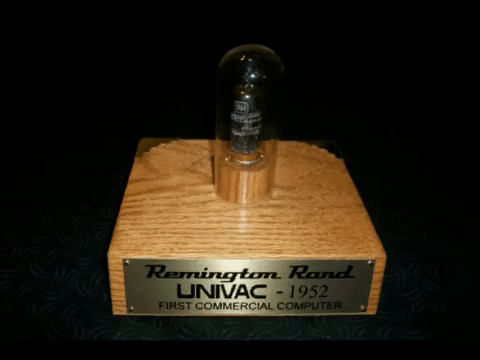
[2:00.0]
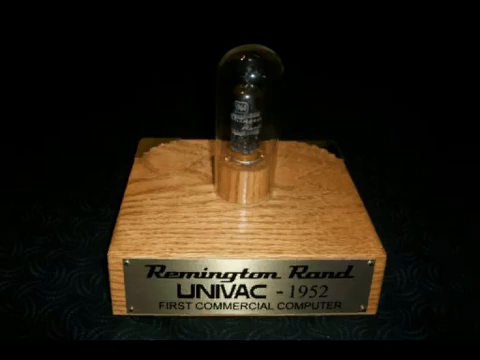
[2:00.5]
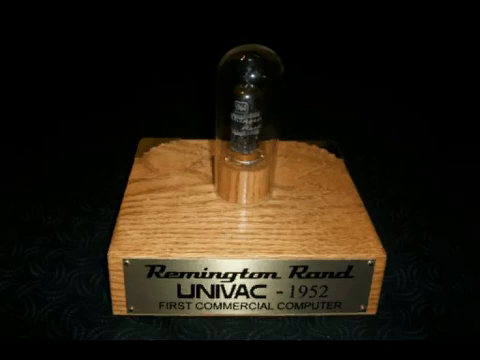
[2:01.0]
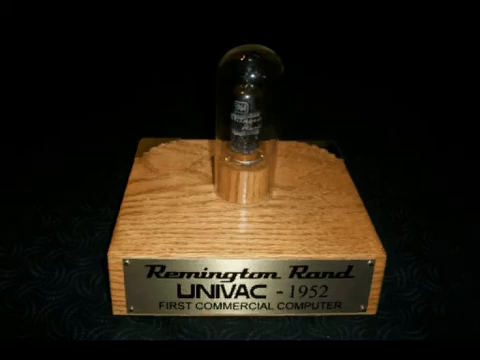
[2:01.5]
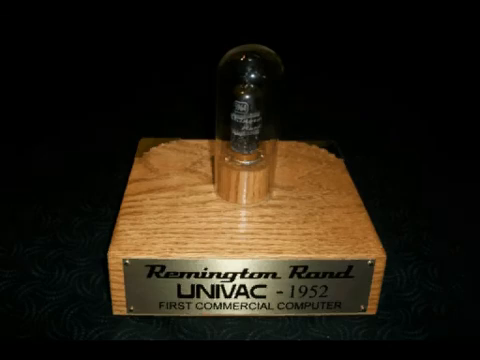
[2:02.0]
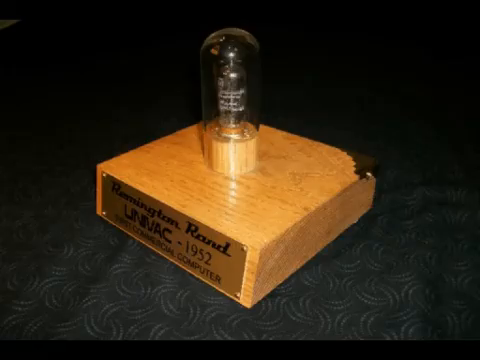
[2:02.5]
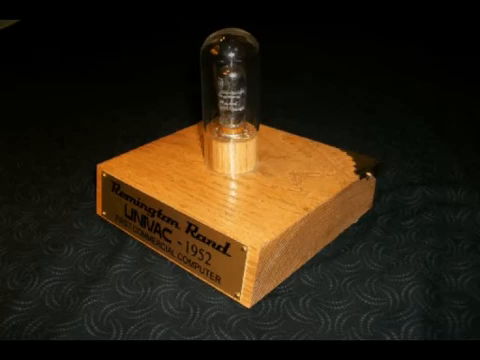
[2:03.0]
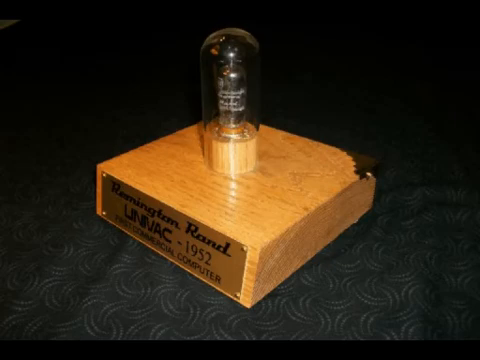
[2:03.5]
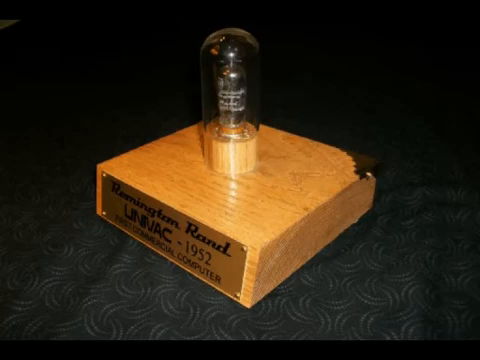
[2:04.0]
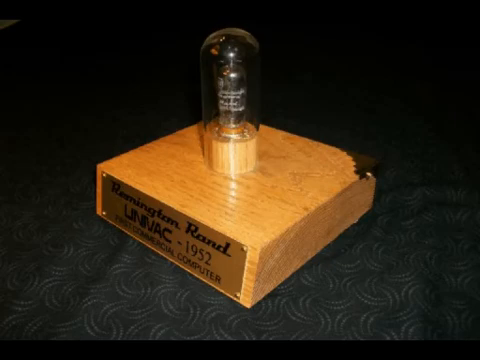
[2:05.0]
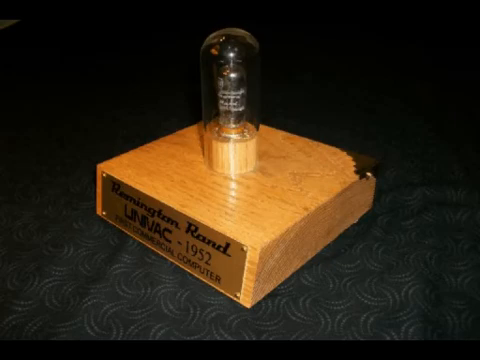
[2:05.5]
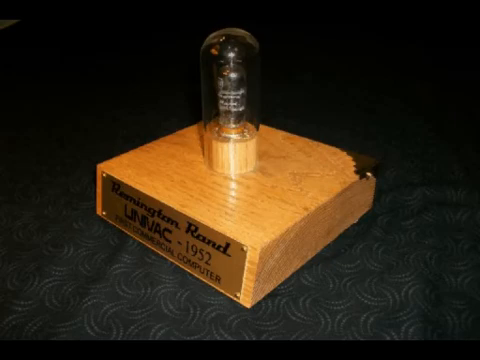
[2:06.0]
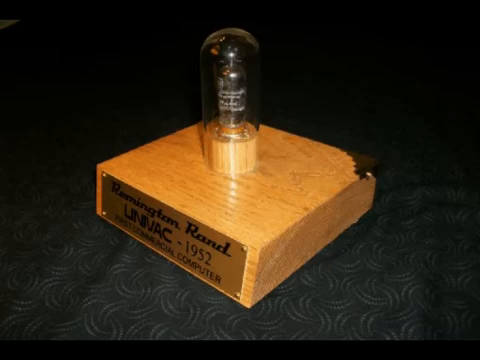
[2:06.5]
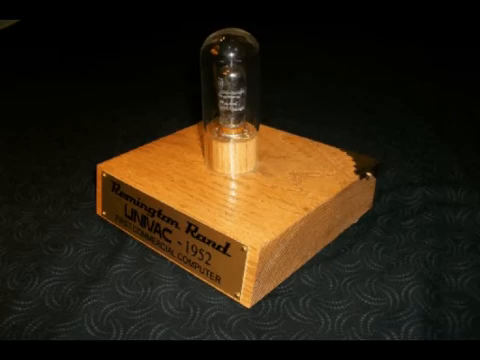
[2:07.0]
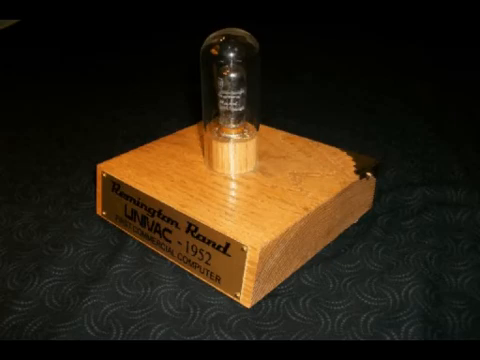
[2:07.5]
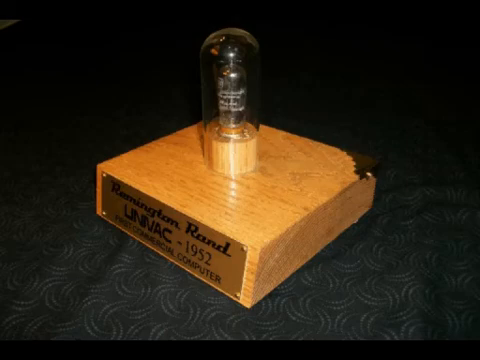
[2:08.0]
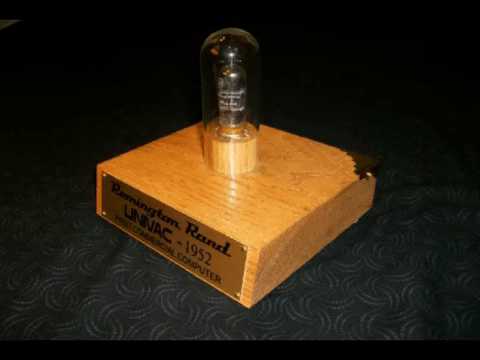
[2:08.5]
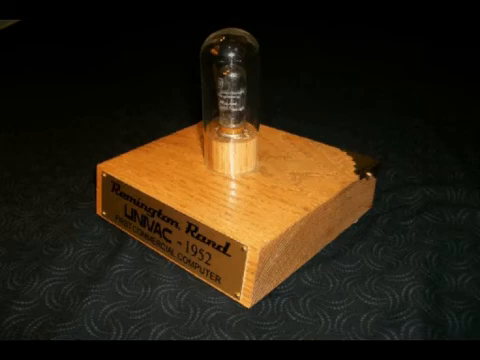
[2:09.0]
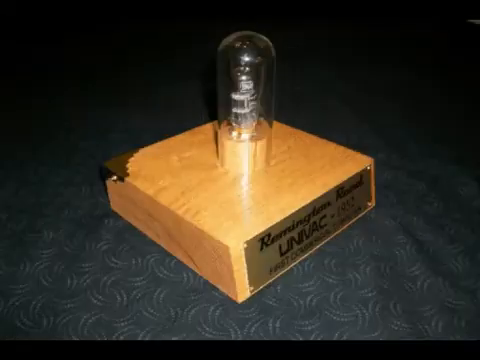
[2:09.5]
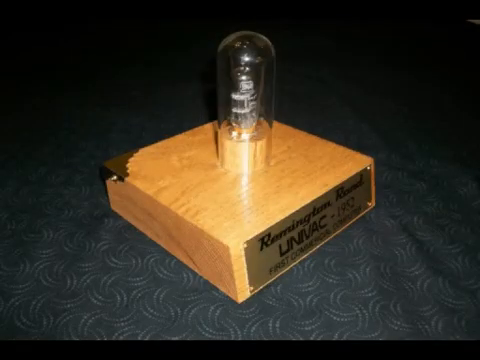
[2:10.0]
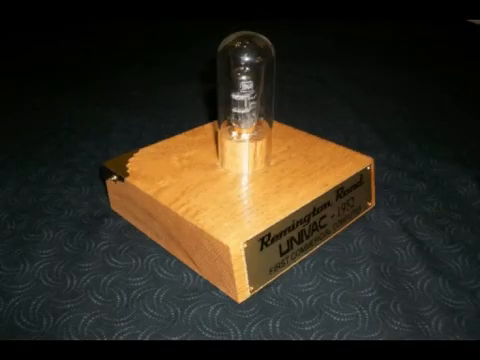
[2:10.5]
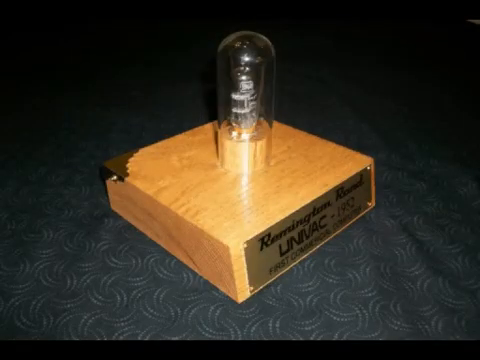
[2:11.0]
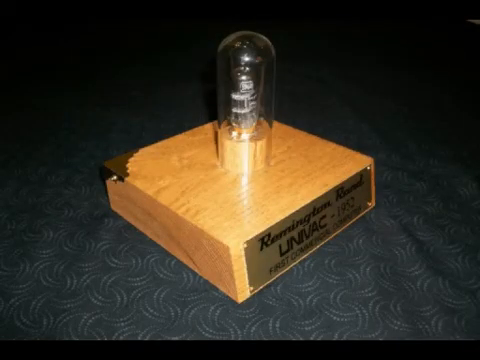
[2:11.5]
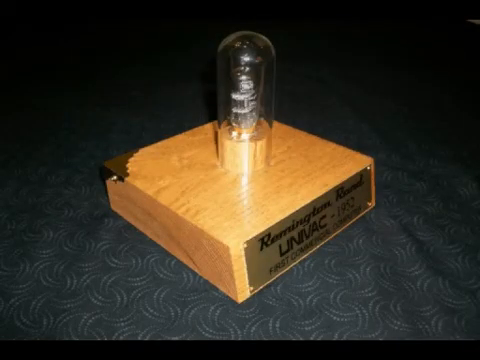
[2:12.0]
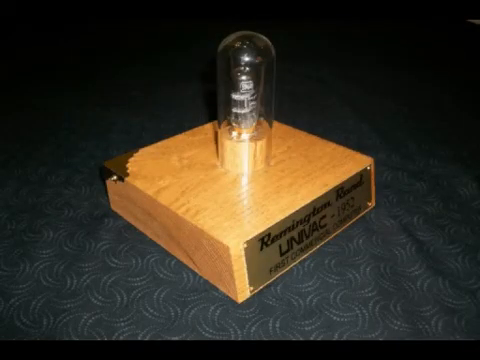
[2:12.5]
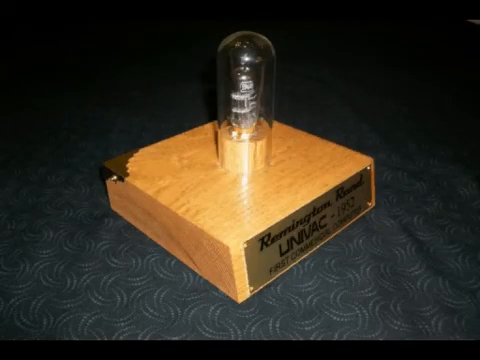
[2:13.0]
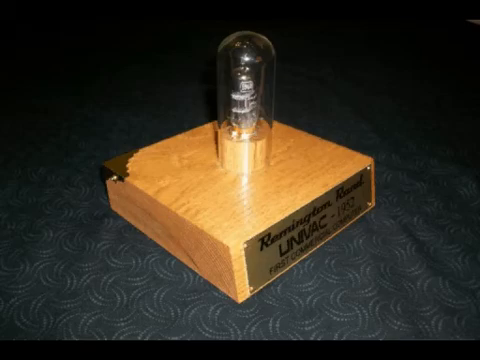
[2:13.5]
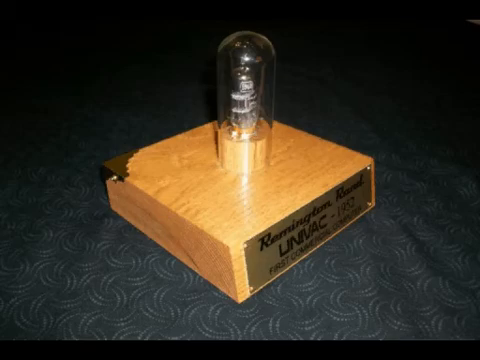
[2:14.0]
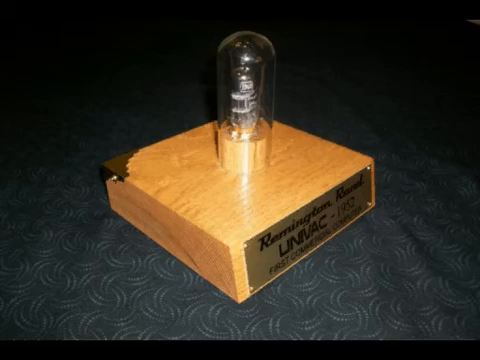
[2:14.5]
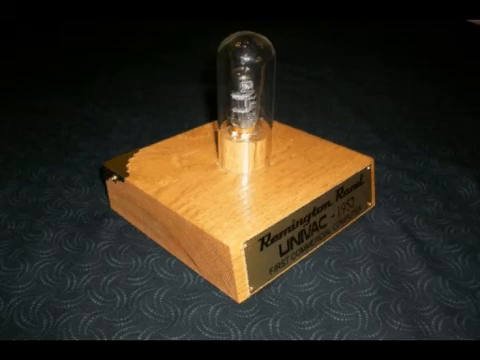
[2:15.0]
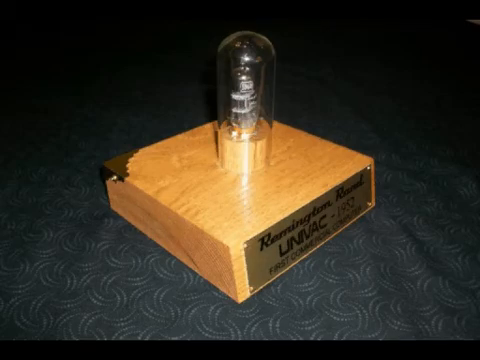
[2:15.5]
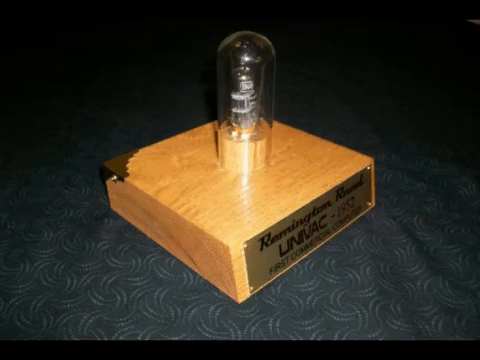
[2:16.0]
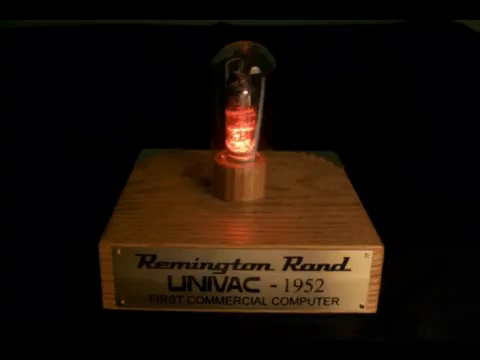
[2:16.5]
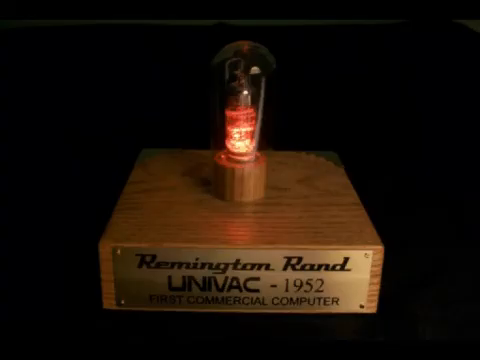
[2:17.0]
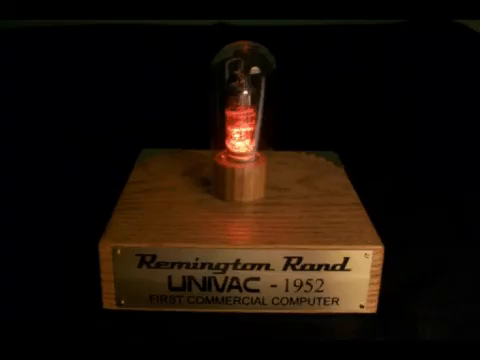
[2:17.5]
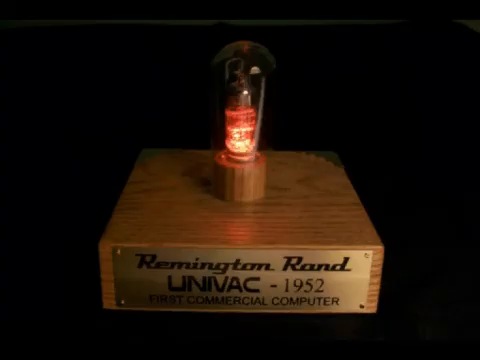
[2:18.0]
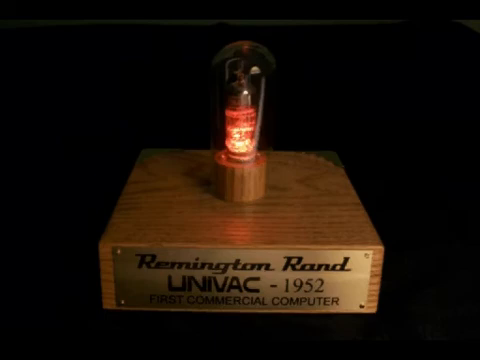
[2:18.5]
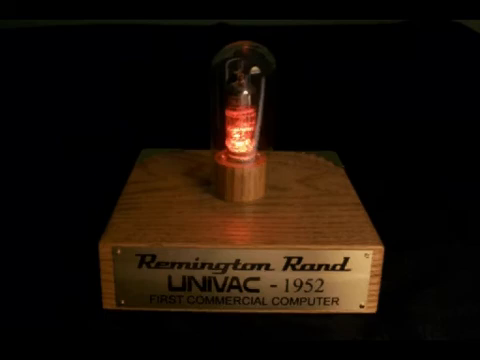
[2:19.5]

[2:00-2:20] An item is on display in a museum, on a stained and lacquered block of wood. The front of the block has a brass nameplate with three lines of text: the top row reads "Remington Rand" in cursive, the middle row reads "UNIVAC-1952", and the third row reads "First Commercial Computer" in all caps. The plate is attached to the front with a screw in each corner, so four screws are visible. In the center of the block is an upraised section with a bulb on a little wooden platform, surrounded by another bulb to create a vacuum. The area around the object is all black. A view from the right shows a light shining on it and reflecting off the lacquered wood, followed by a view from the left with light shining on the wood and reflecting. A view from the front then shows the bulb illuminated; it is a little dark, but the light and electricity running through the filaments inside the bulb are visible.